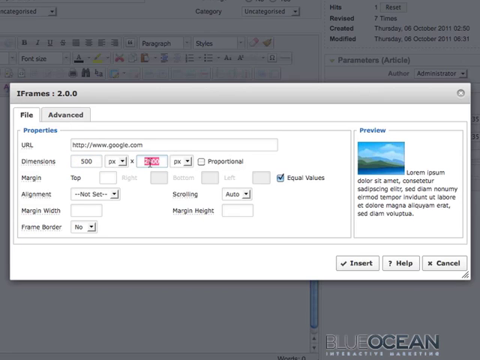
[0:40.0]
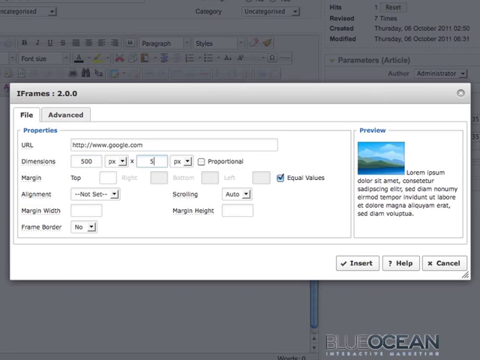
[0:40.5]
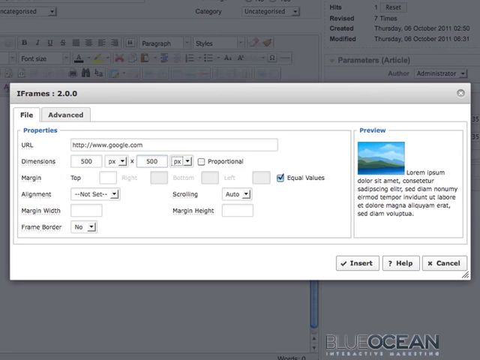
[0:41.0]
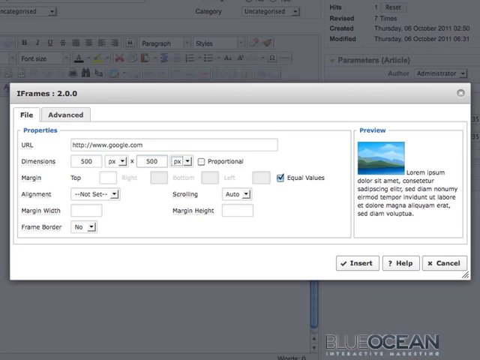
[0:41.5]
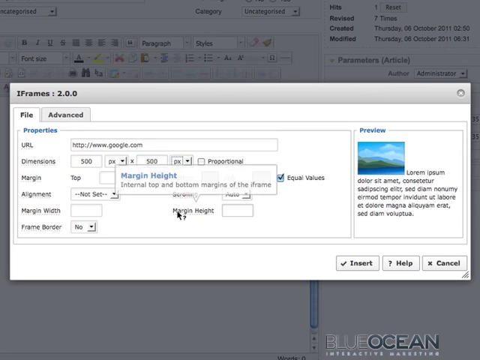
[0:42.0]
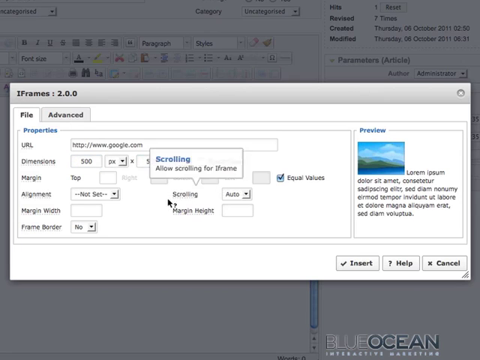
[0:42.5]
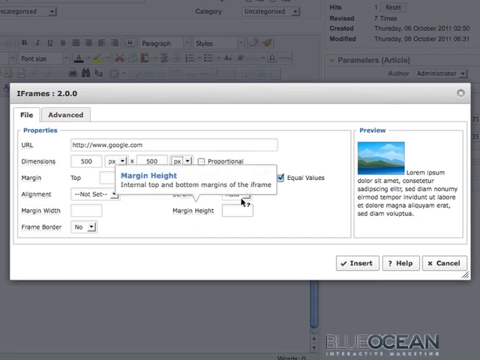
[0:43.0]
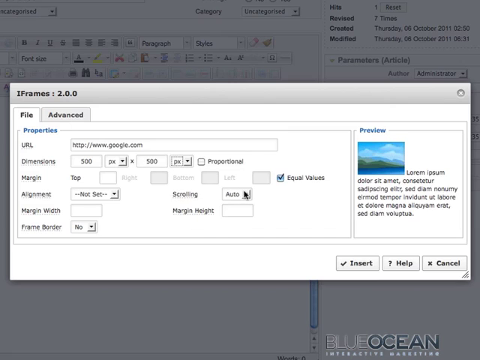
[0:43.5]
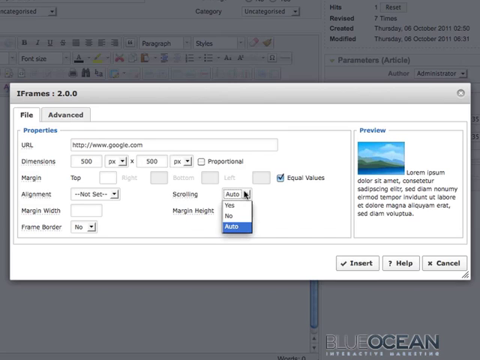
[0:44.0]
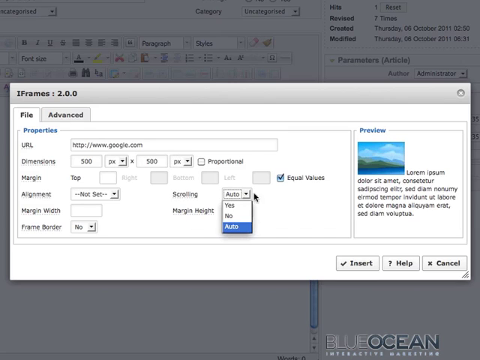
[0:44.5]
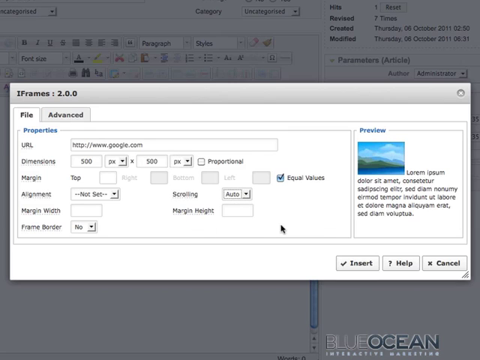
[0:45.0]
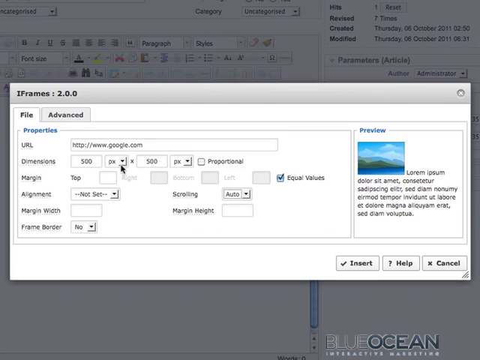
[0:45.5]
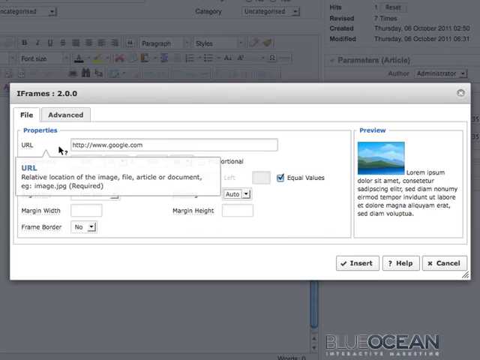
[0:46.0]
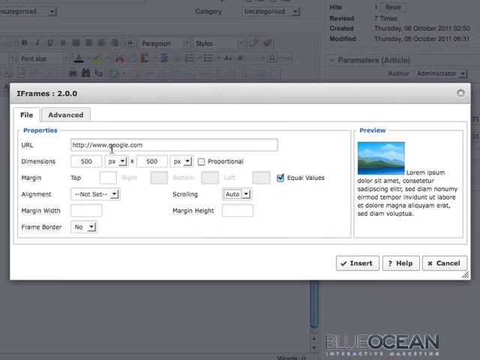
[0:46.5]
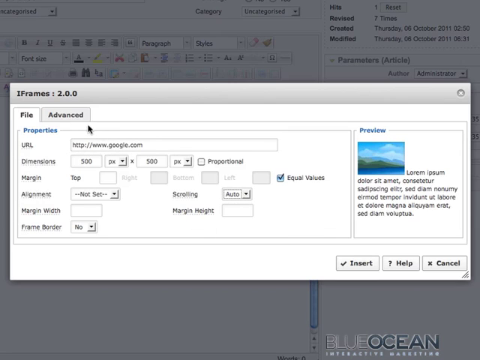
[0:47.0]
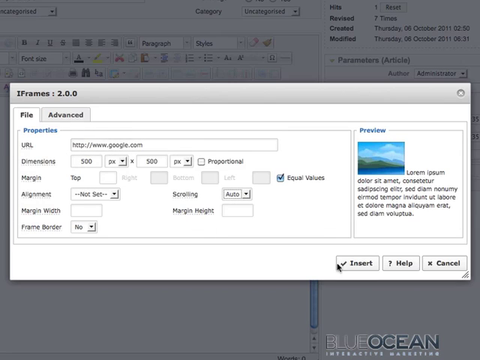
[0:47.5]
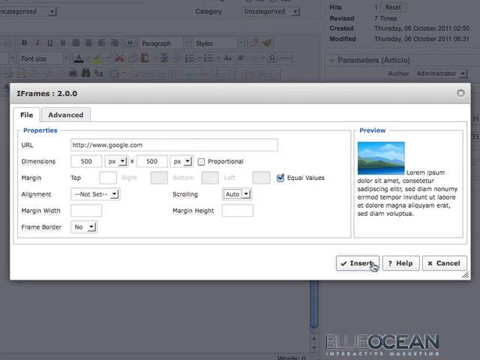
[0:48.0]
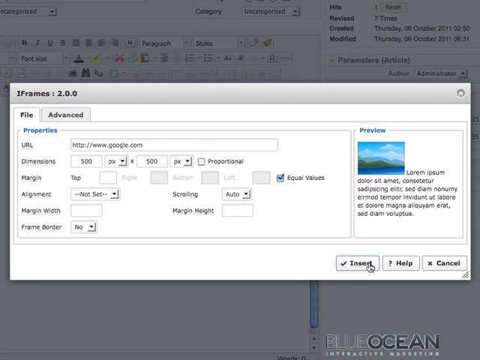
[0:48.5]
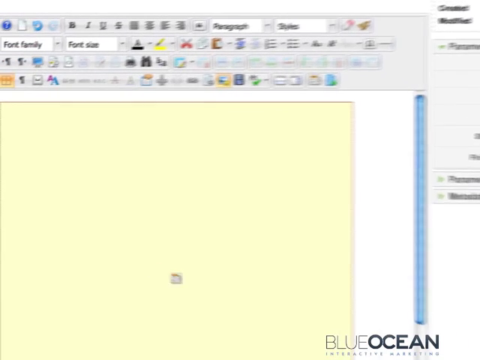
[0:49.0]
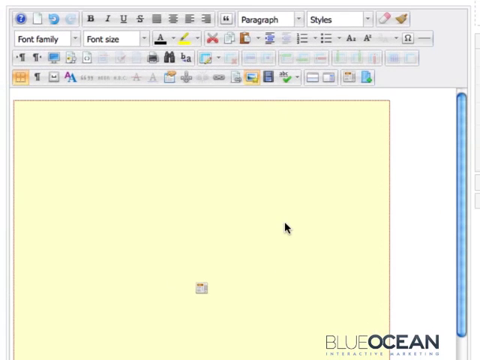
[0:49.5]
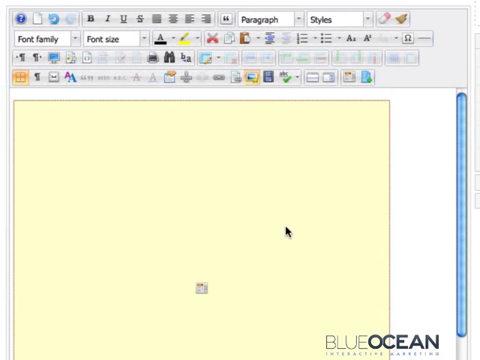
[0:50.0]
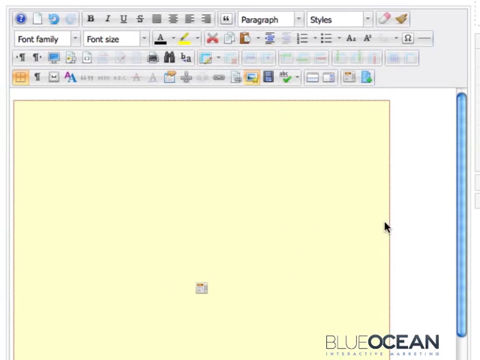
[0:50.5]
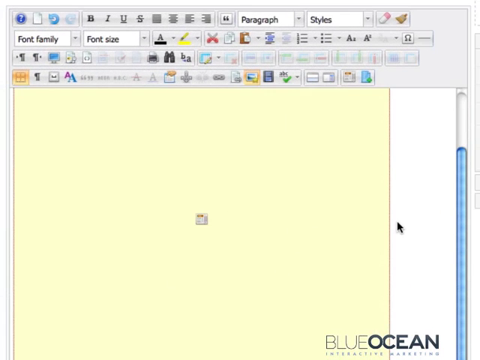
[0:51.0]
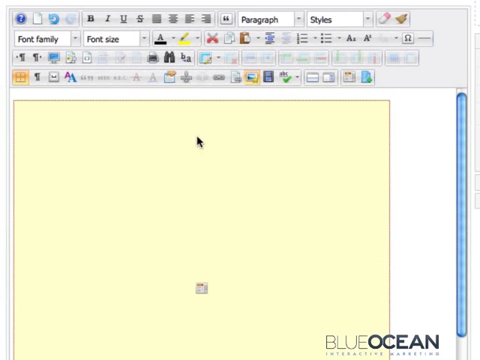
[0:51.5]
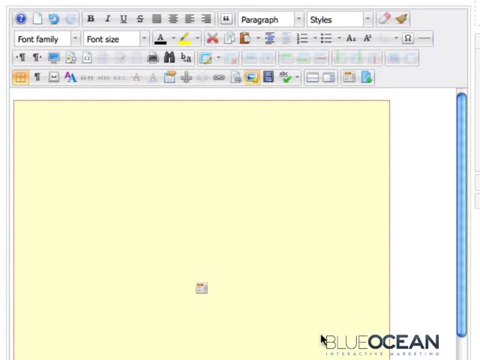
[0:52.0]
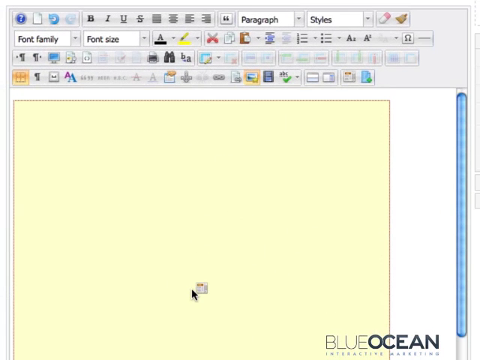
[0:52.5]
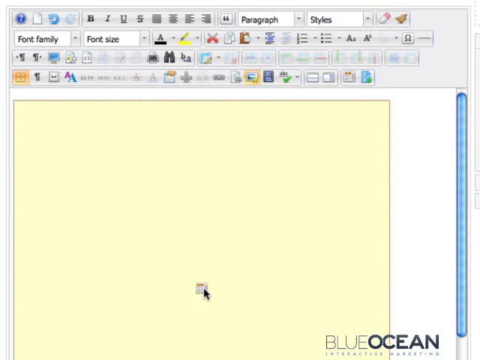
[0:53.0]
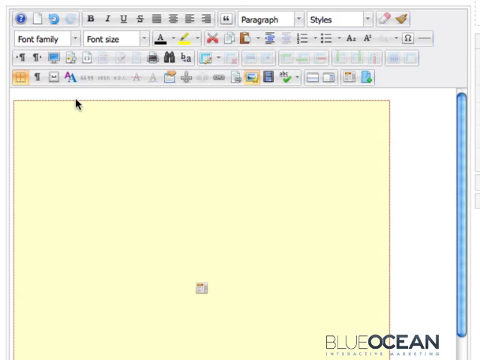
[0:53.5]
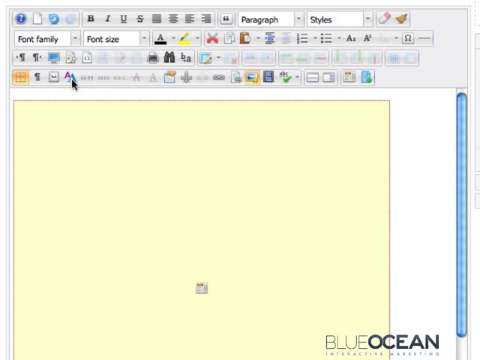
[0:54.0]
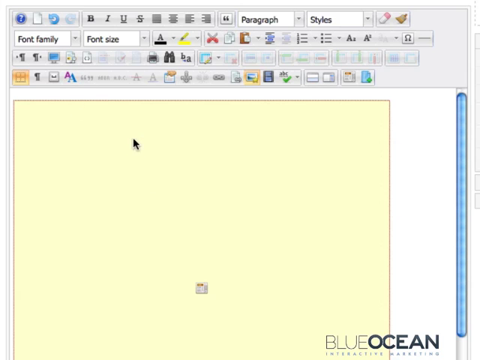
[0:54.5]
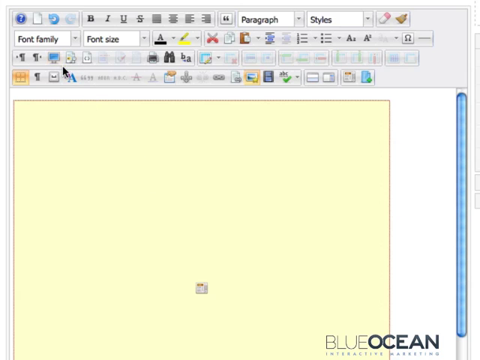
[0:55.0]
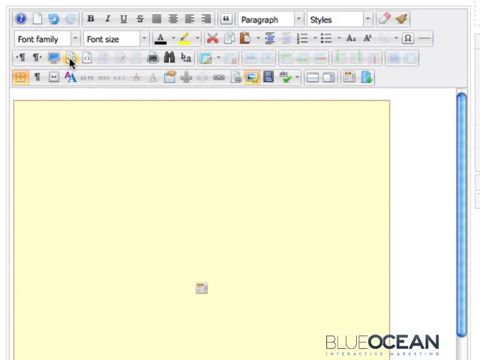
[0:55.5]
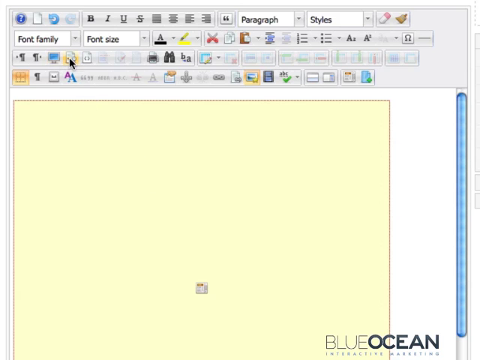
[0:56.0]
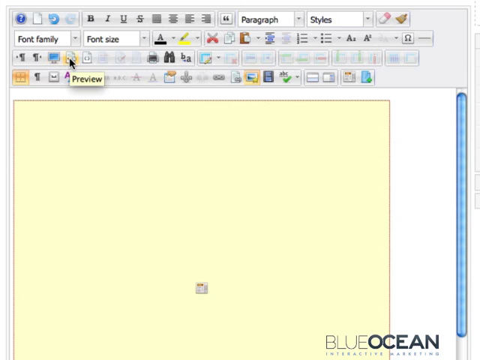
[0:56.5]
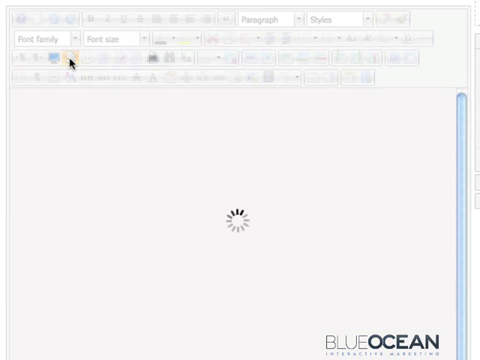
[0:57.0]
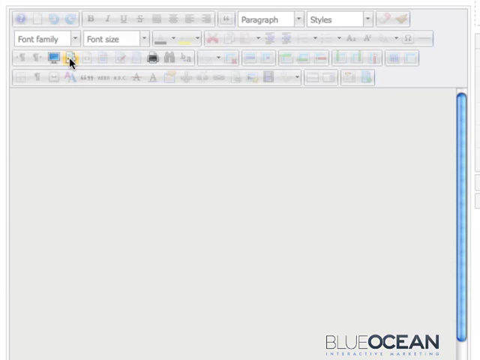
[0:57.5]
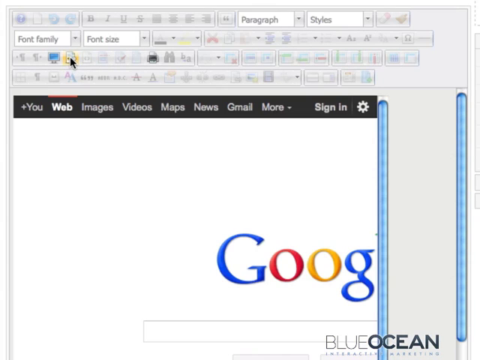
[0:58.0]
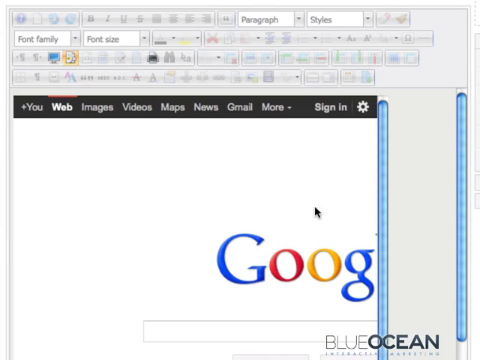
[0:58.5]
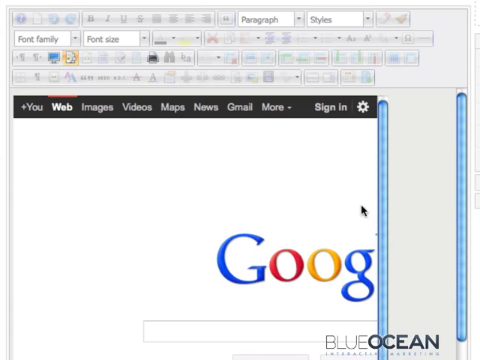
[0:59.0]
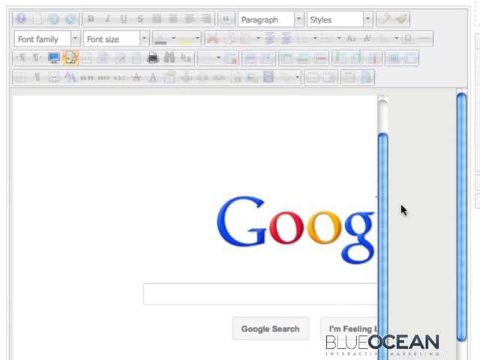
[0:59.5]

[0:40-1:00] Another form loads, the same Blue Ocean form. A mouse moves around clicking every corner, and a yellow page opens. A Google page appears, and someone seems to be searching something on Google within the form while clicking repeatedly with the mouse. The word "advanced" is written, and paragraph, company, font size and font family are visible. Another yellow page appears as the mouse keeps clicking, moving around quickly and scrolling down, too fast for the text to be read. "Preview", "view images" and "Google" are visible, and someone clicks in a box with the mouse.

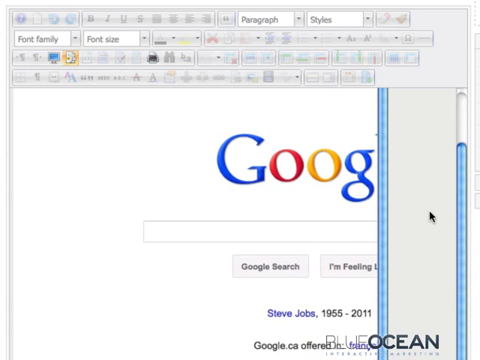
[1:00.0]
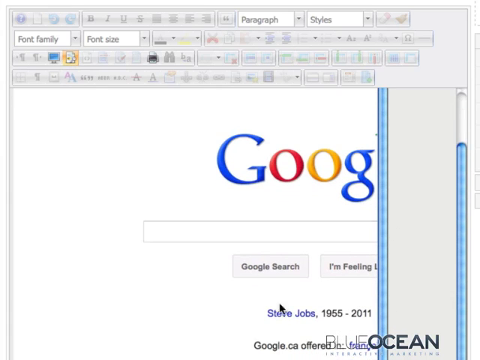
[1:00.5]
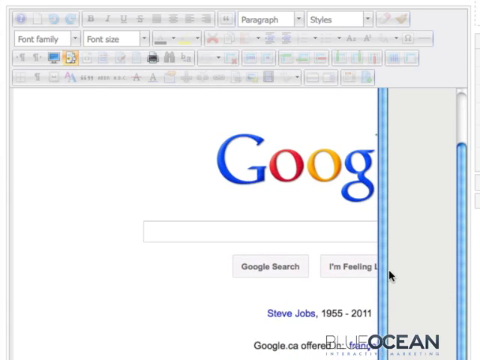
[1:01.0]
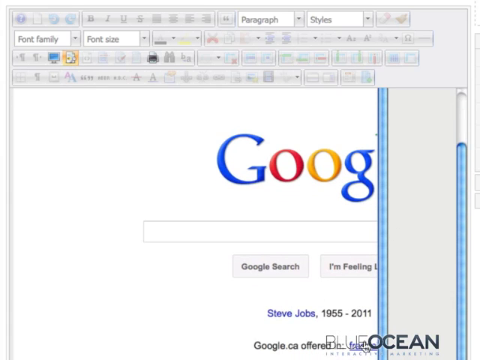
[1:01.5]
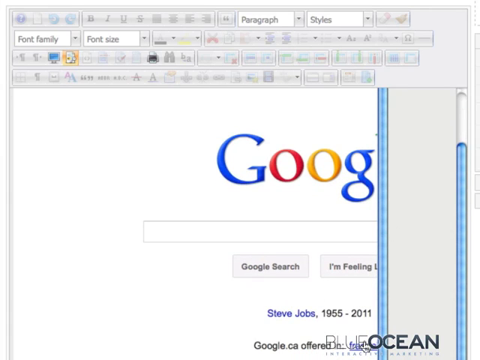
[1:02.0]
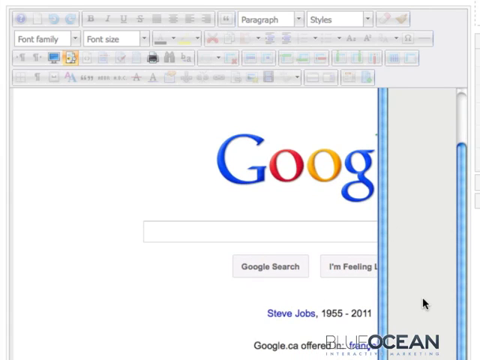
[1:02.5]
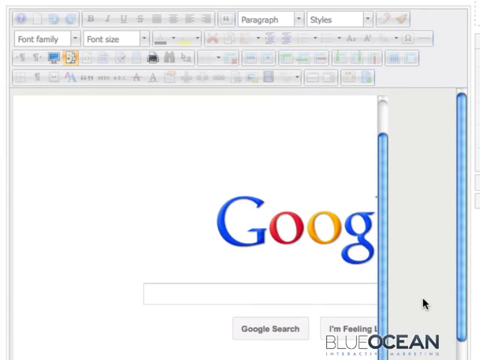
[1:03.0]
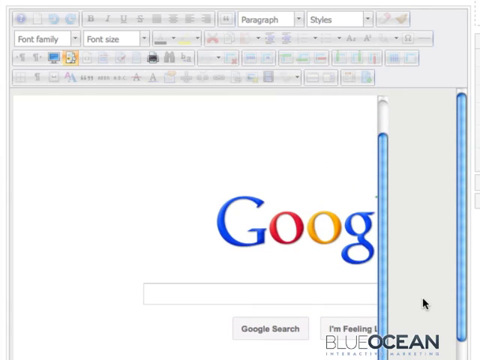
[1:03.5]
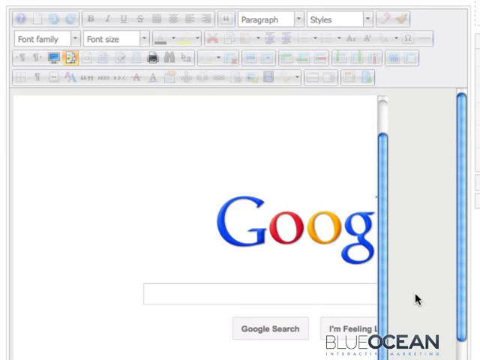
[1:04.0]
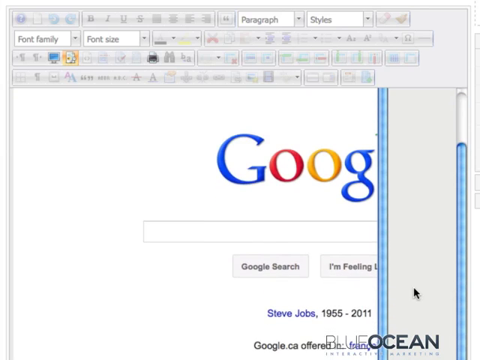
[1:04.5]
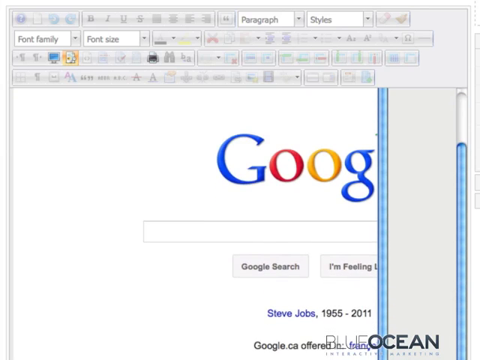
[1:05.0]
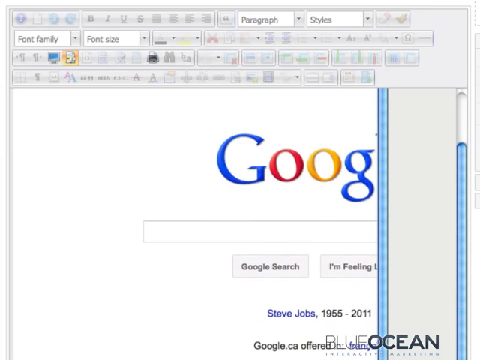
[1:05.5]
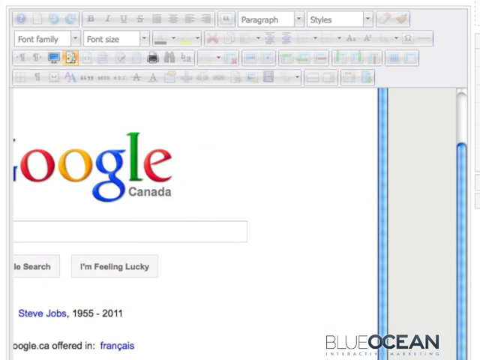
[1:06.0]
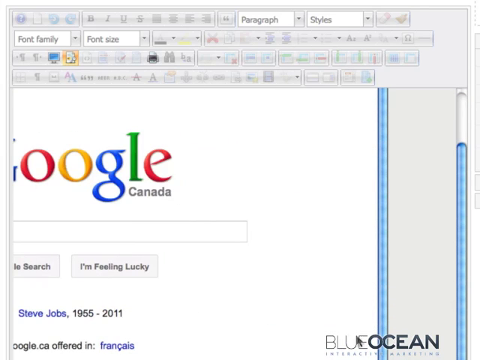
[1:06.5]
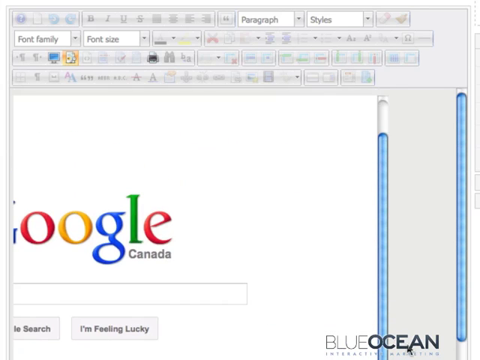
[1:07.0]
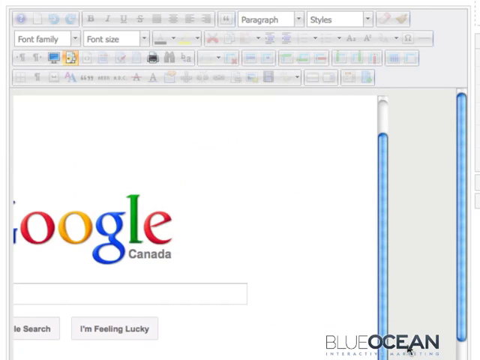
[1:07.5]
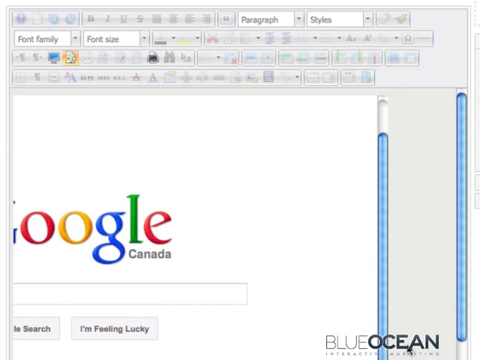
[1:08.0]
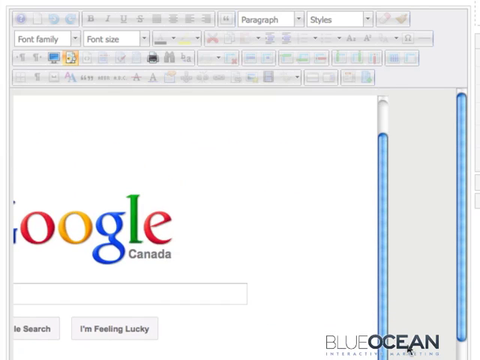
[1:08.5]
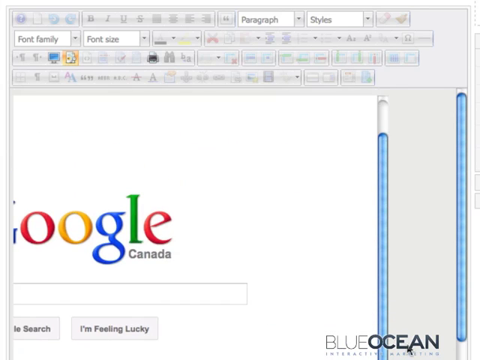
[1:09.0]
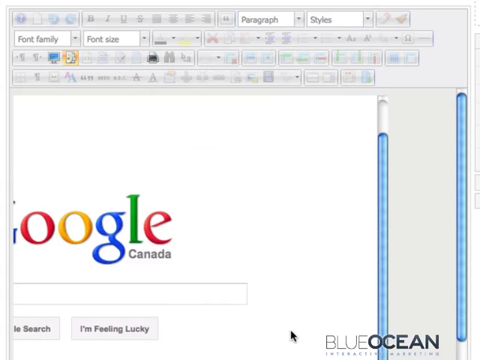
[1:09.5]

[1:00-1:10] The same Blue Ocean form is shown, with font family, font size and style options. "I'm feeling lucky" and a Google search appear, with "Steve Jobs 1955" and "2011" written on the page. Someone uses a mouse to click in the form, apparently organizing a few things, and scrolls down.